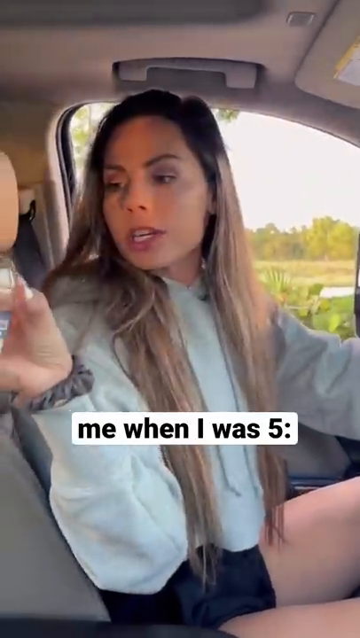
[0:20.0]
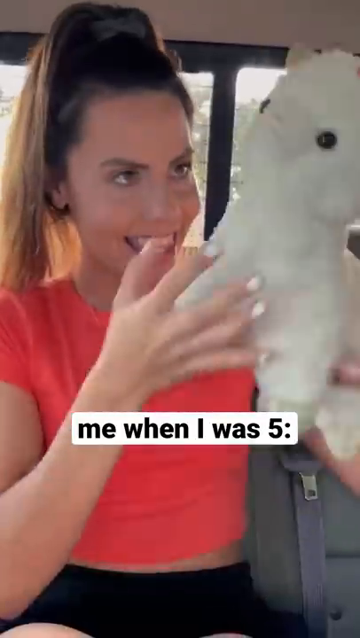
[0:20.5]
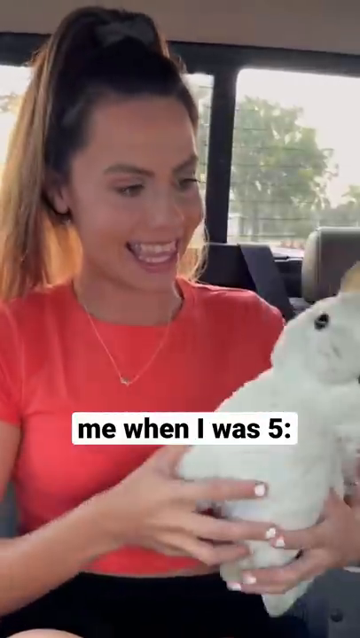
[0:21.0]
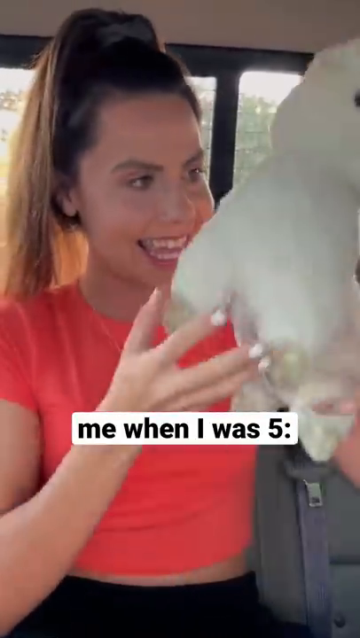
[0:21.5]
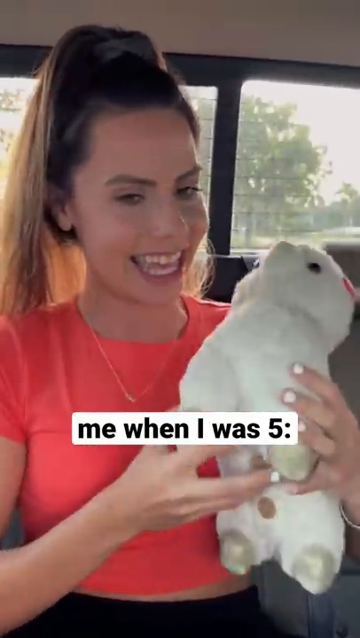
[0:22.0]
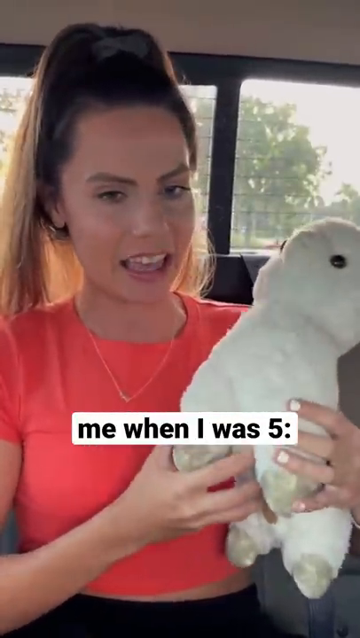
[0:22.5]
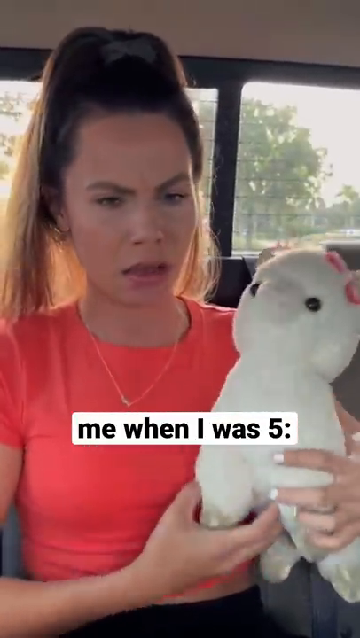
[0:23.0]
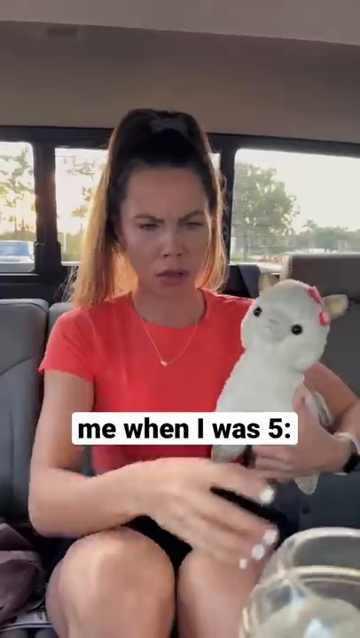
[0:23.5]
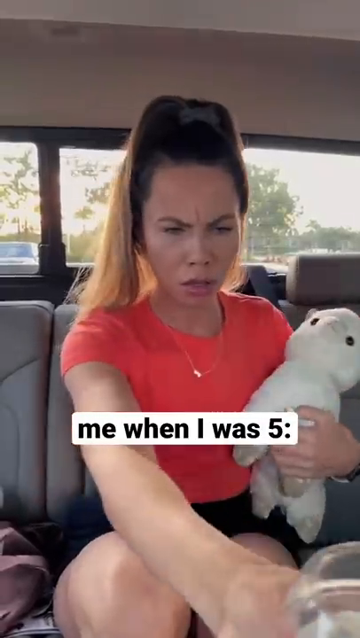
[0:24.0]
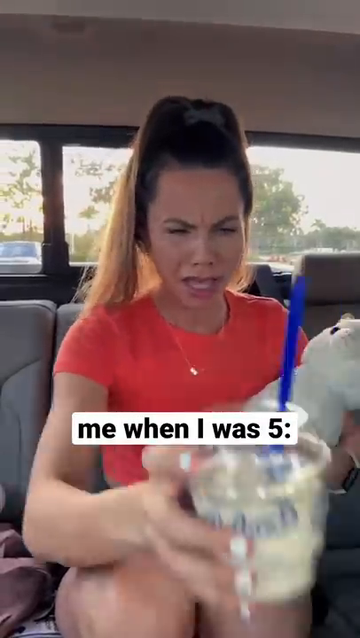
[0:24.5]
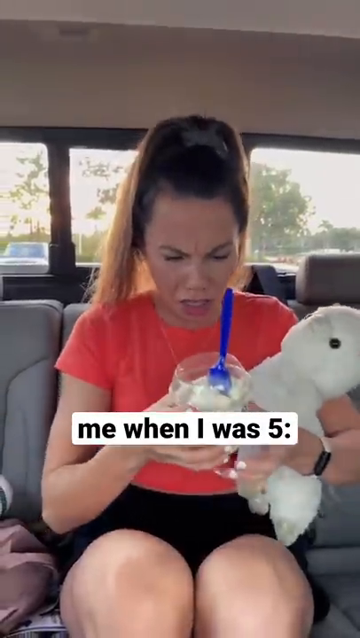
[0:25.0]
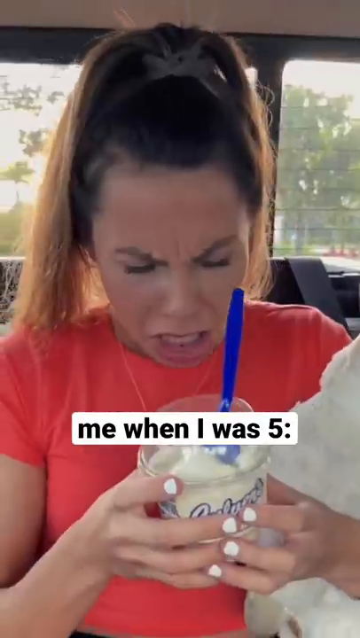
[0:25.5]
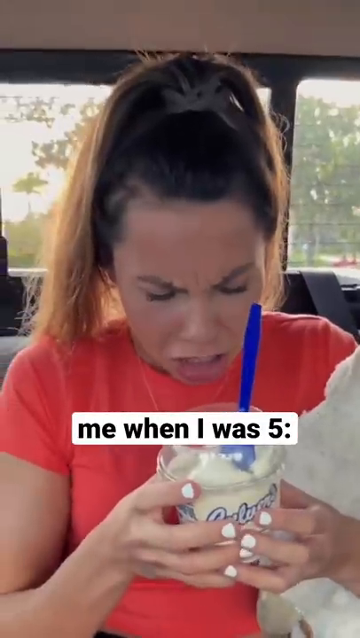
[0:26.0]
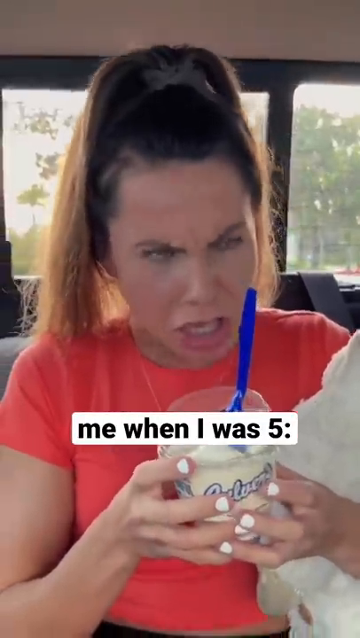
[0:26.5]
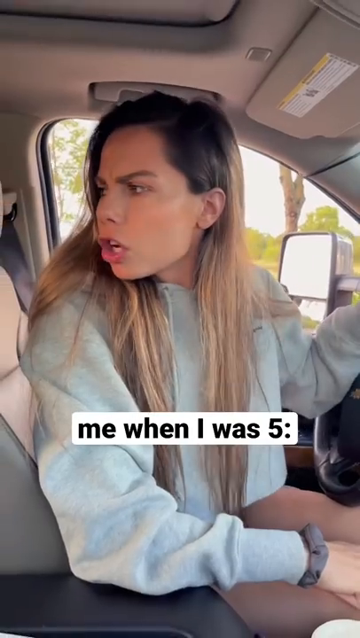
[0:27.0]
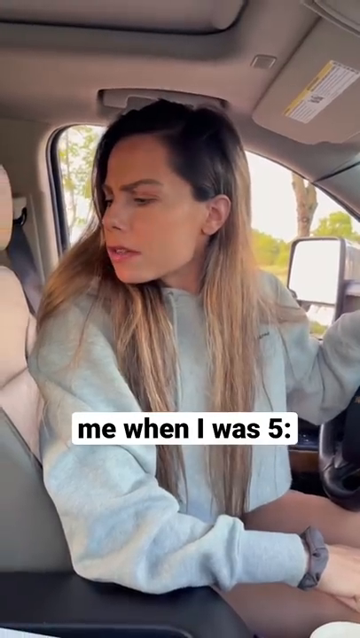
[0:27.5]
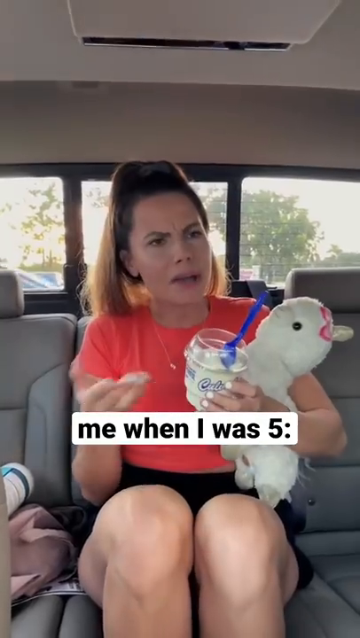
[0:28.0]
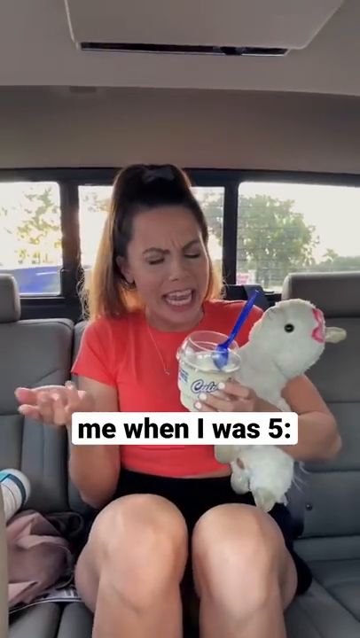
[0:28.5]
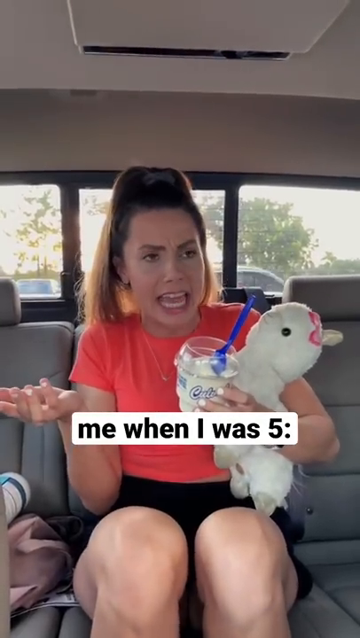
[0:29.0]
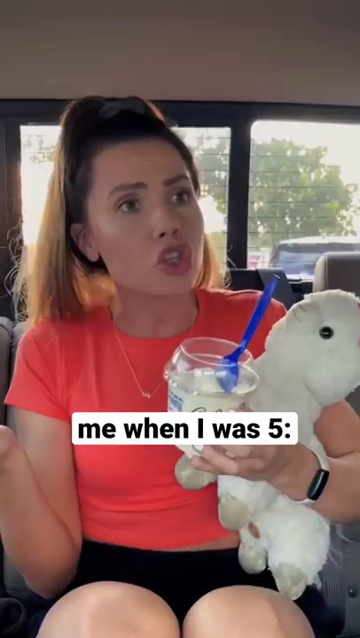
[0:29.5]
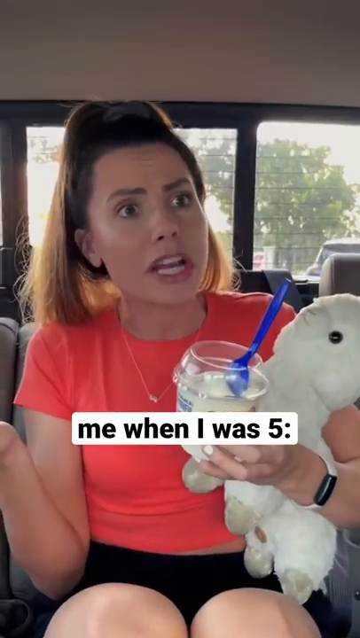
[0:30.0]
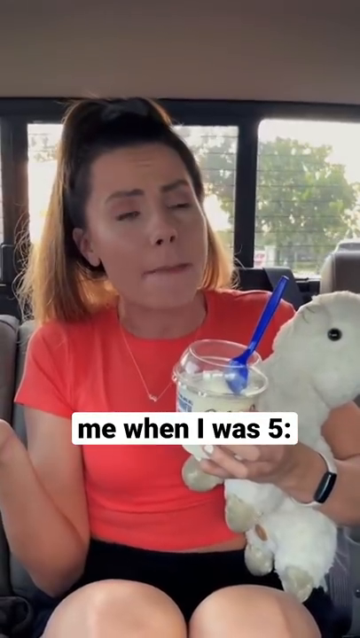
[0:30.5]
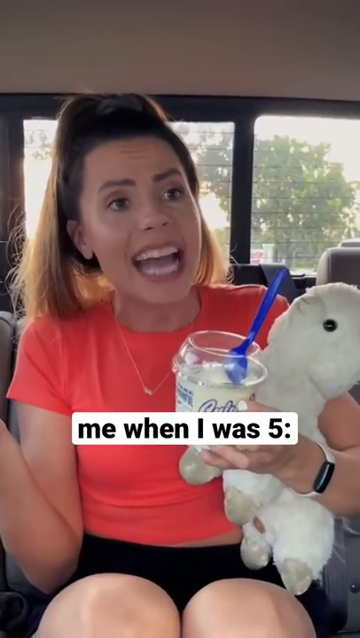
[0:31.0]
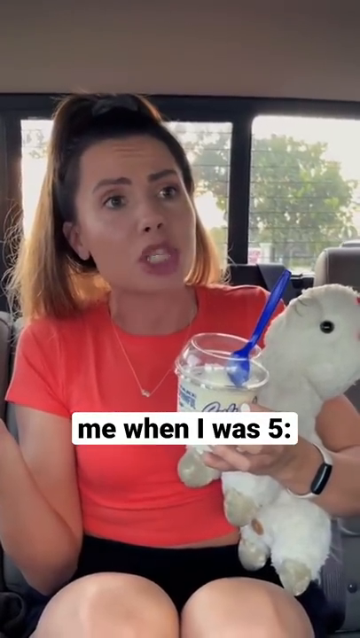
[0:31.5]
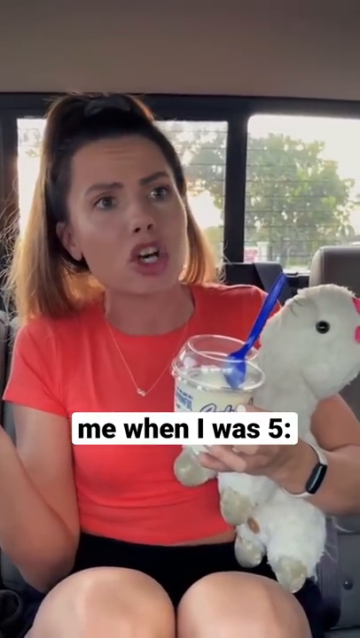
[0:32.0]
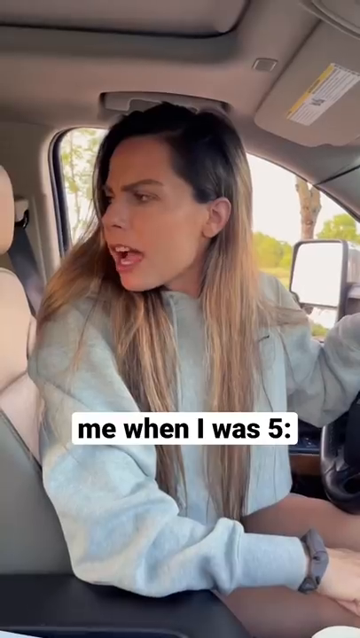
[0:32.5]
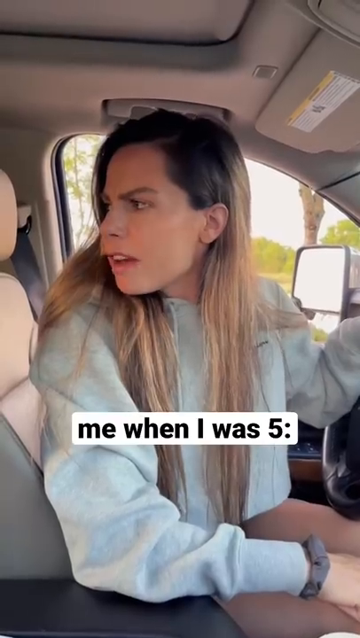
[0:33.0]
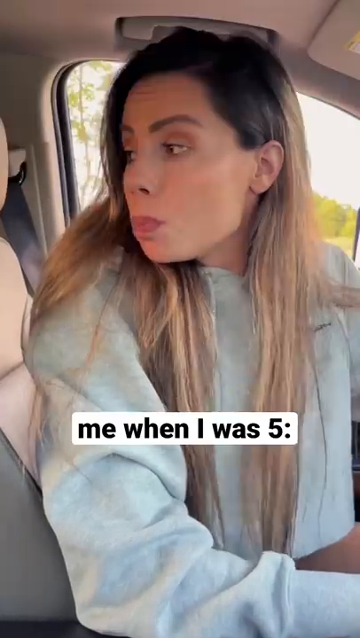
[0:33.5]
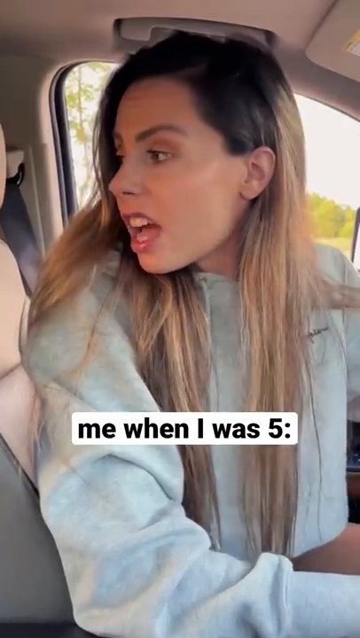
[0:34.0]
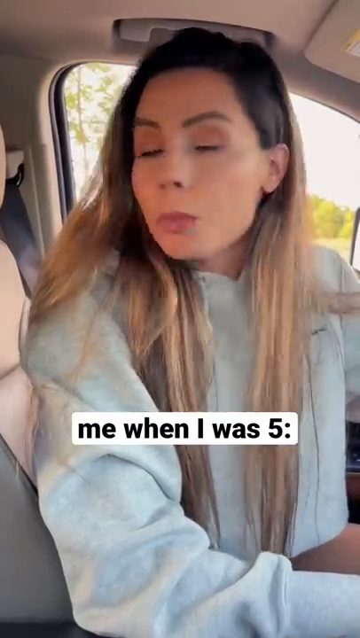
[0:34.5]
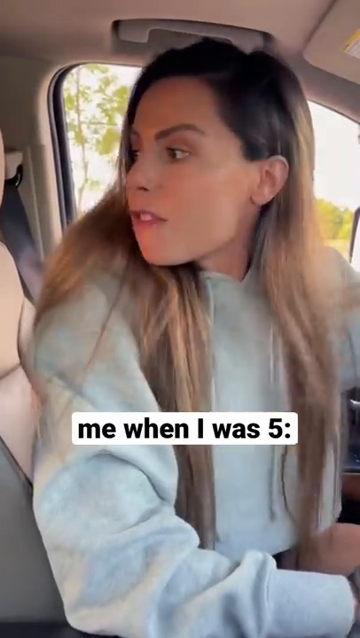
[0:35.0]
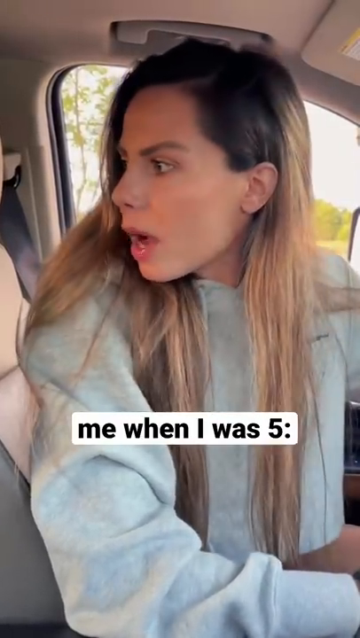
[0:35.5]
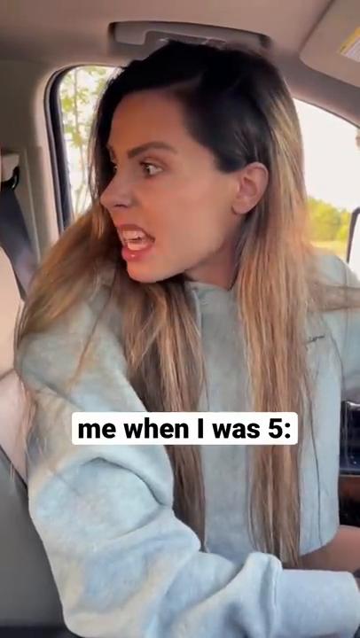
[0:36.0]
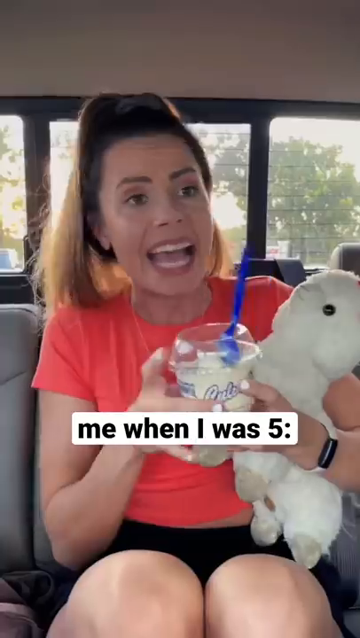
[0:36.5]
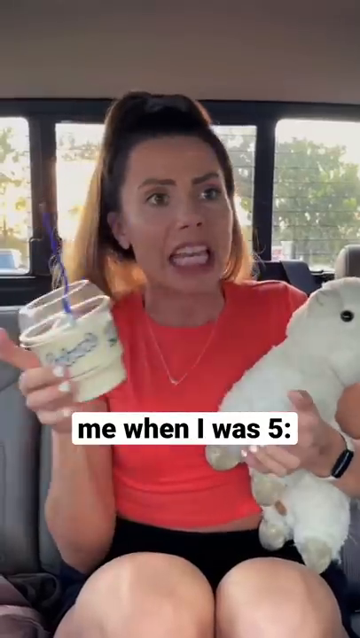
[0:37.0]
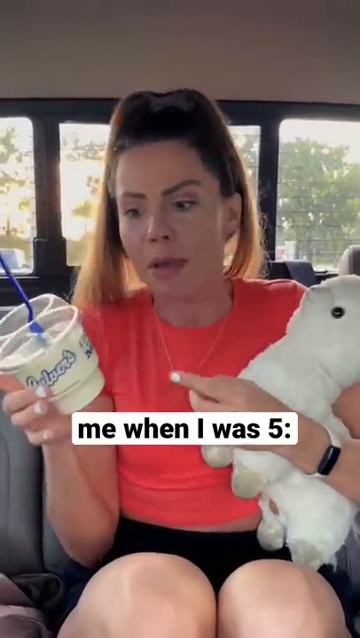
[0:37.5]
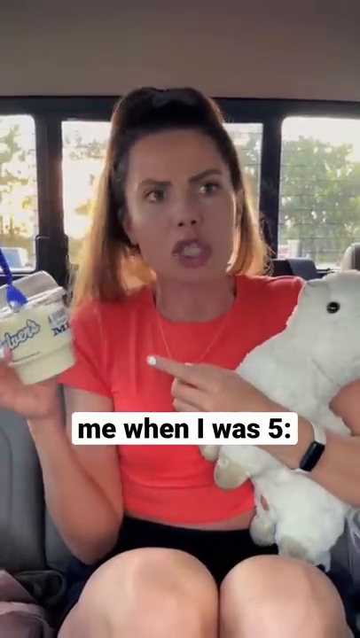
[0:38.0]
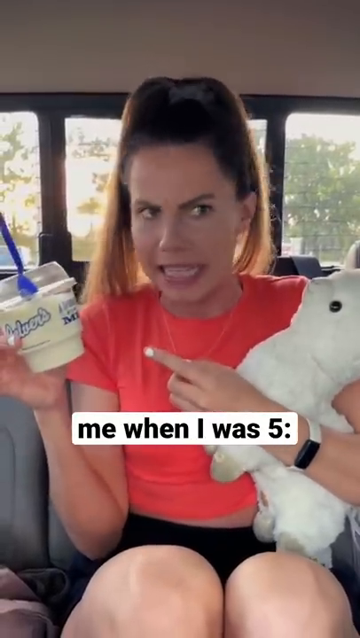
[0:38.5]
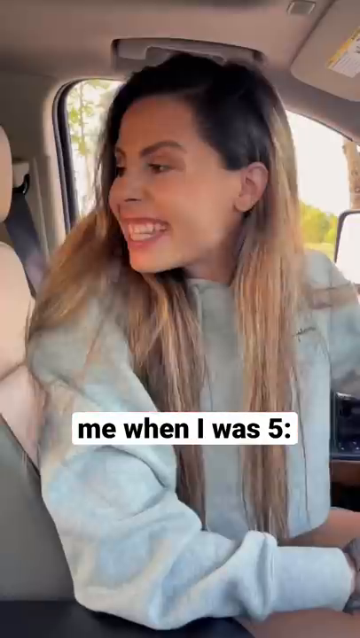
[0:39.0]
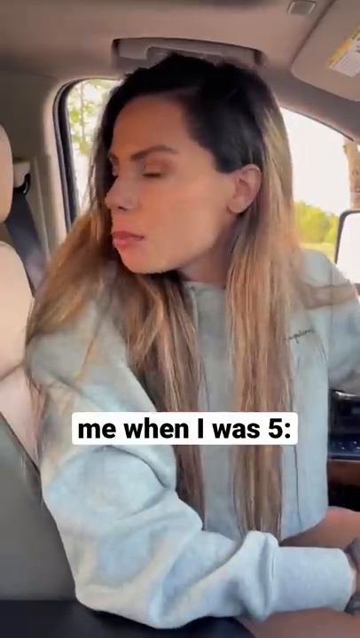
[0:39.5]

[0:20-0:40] The mother in the front seat hands the daughter an ice cream mixture in a cup with a spoon and a wide opening at the top to scoop out the ice cream. The mother is smiling at first but then becomes very upset with the daughter, who begins to complain about what she has received. The mother handing the daughter the ice cream repeats in a loop. Before this, the daughter is playing with what looks like a stuffed rabbit or stuffed lamb. The five-year-old complains about the drink and doesn't seem to want it the way it was given to her. The mother turns around, looking into the back seat, and fusses at the daughter to take what she has and not complain. The daughter wears a melon-colored short-sleeved shirt and what look like black shorts, with her hair in a high ponytail. She plays with a white lamb stuffed animal, throwing it up in the air. The mother appears to be wearing a gray sweatshirt, a gray hoodie.